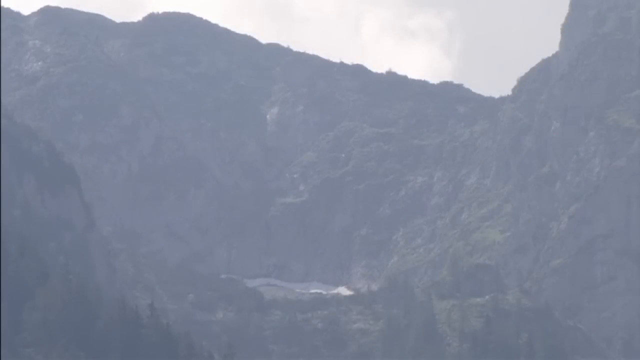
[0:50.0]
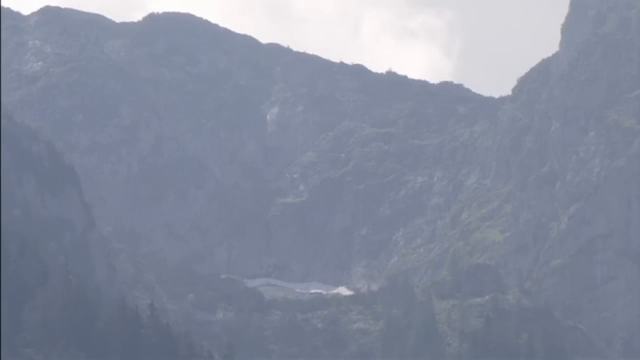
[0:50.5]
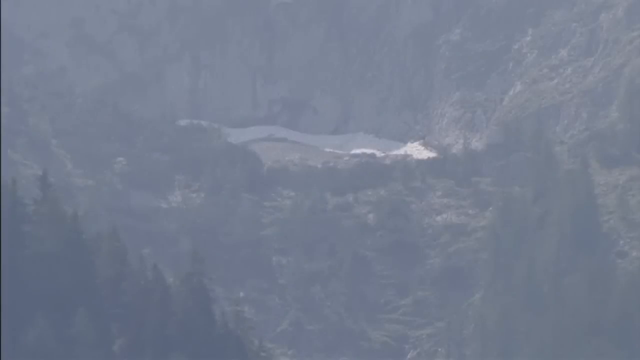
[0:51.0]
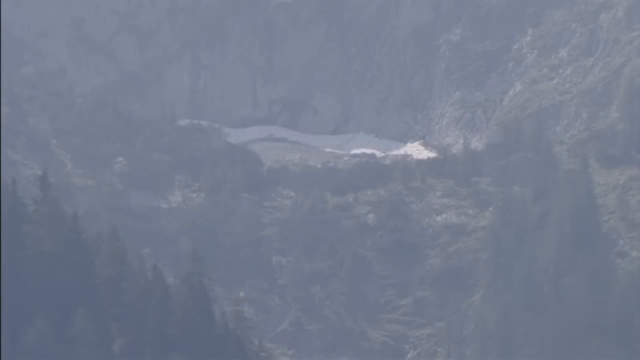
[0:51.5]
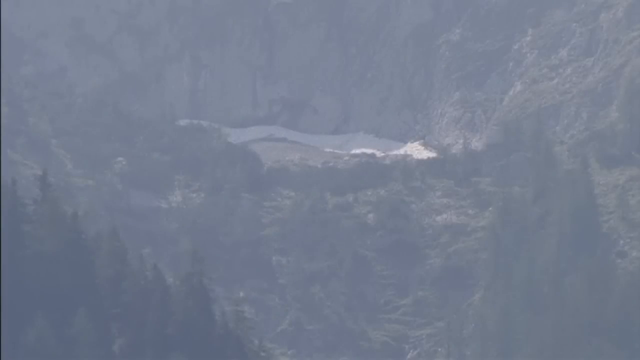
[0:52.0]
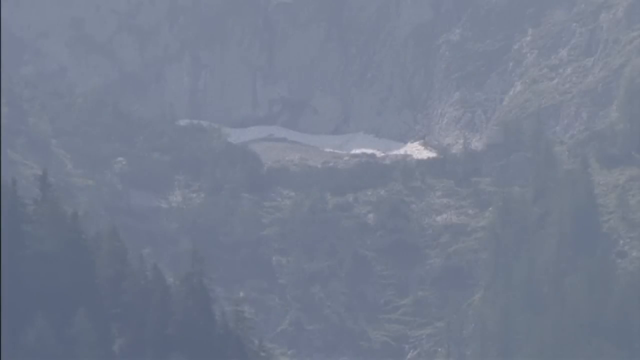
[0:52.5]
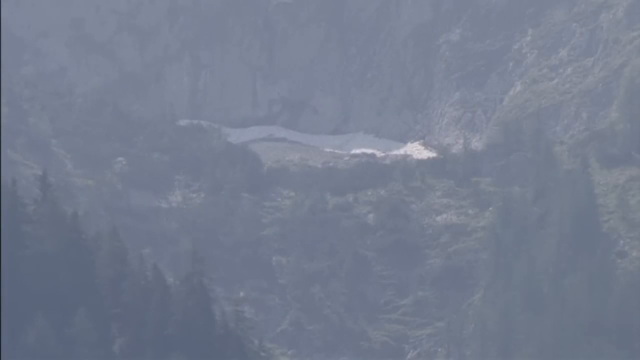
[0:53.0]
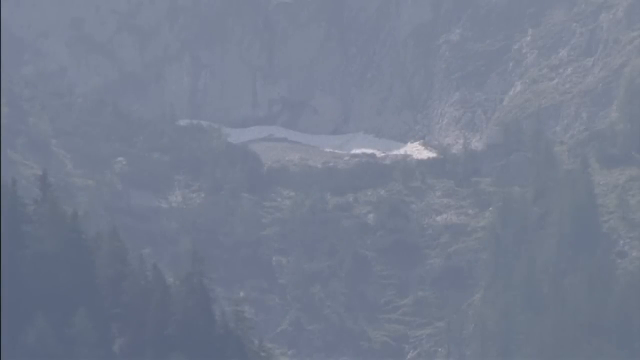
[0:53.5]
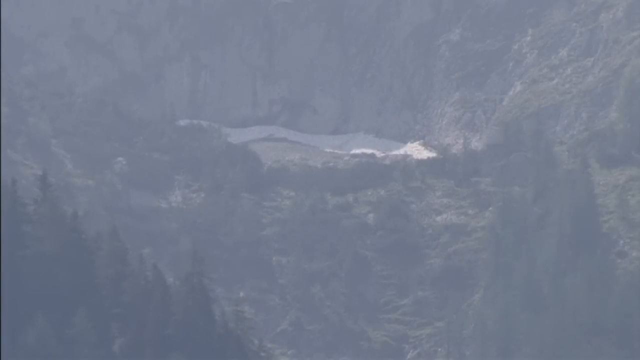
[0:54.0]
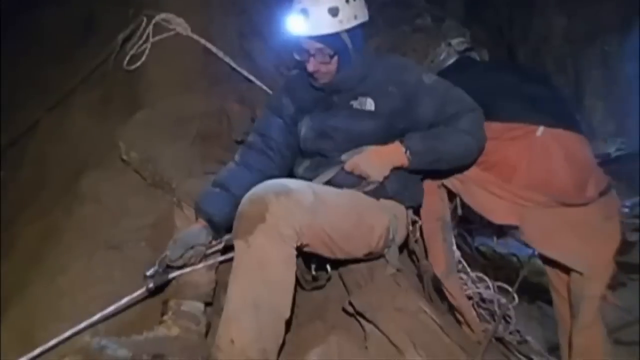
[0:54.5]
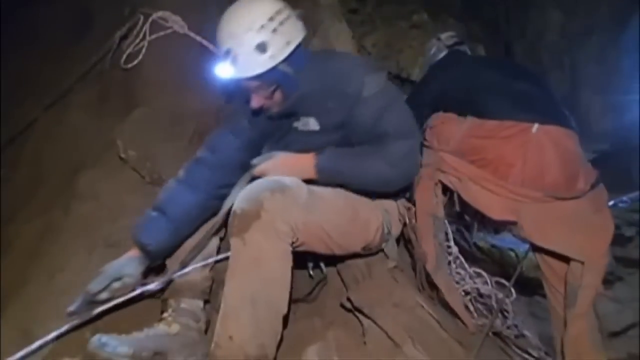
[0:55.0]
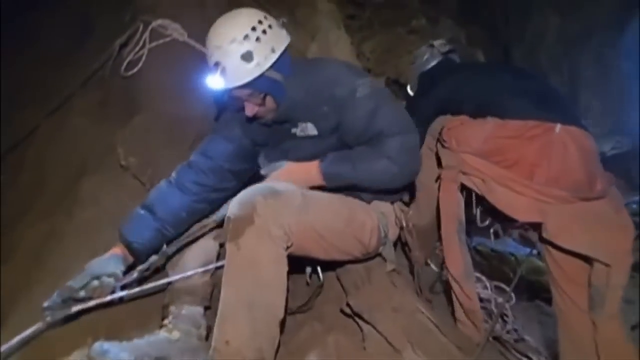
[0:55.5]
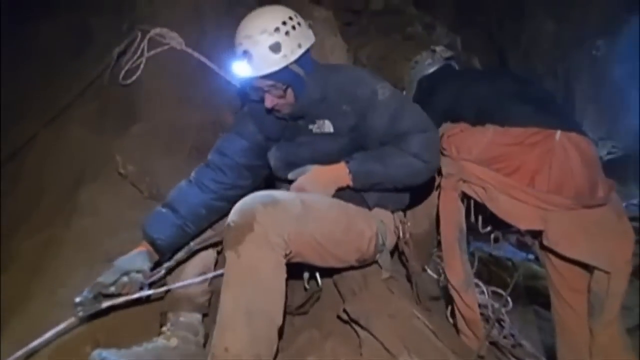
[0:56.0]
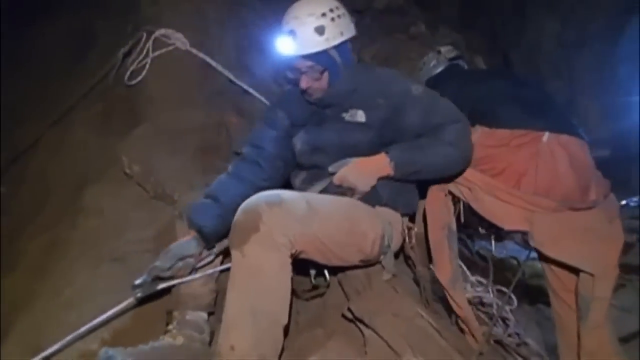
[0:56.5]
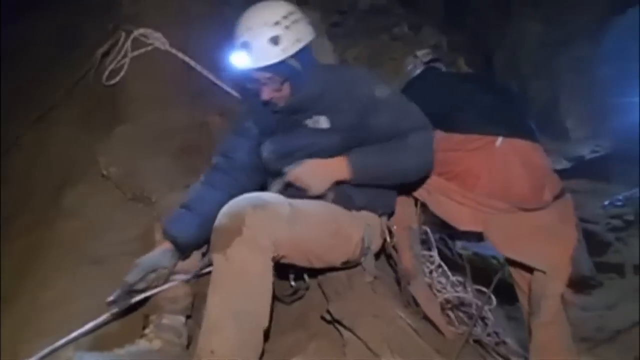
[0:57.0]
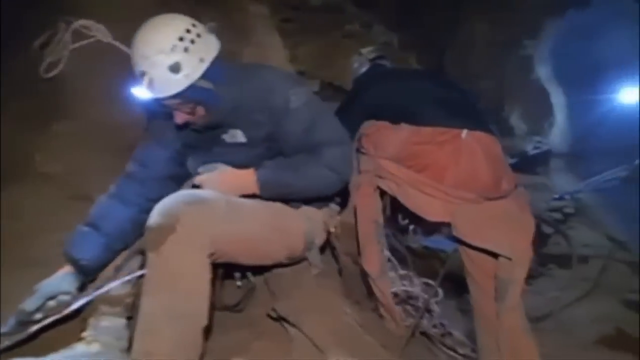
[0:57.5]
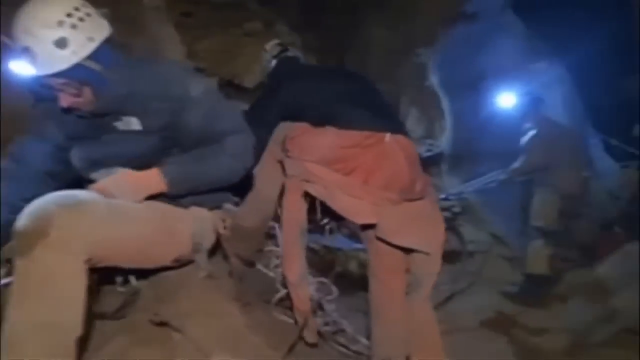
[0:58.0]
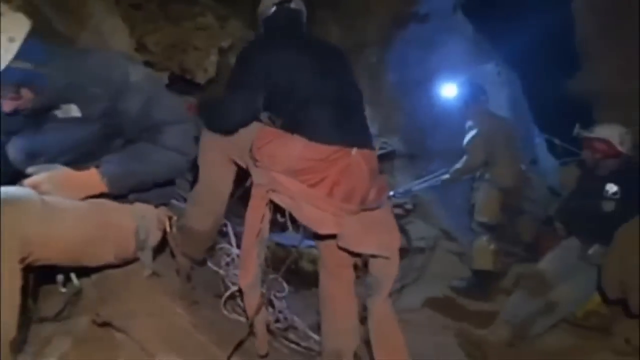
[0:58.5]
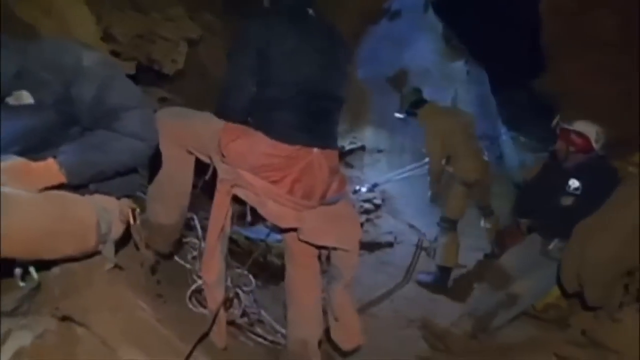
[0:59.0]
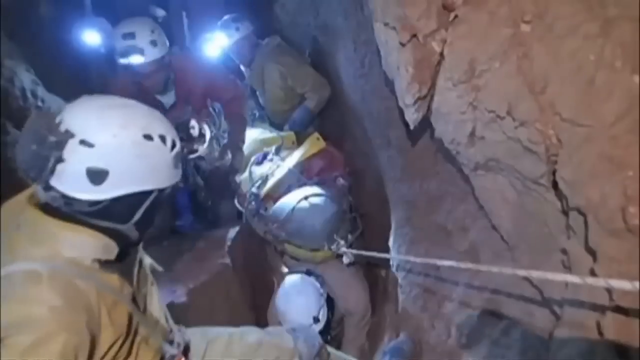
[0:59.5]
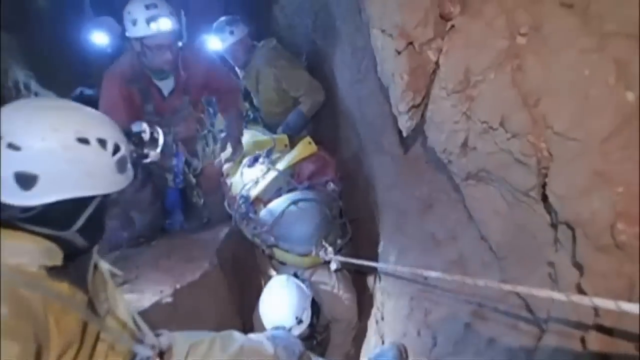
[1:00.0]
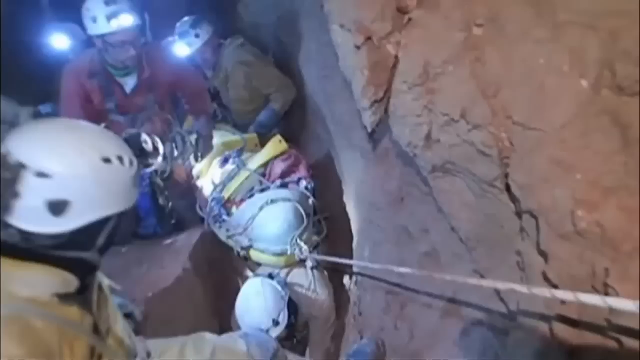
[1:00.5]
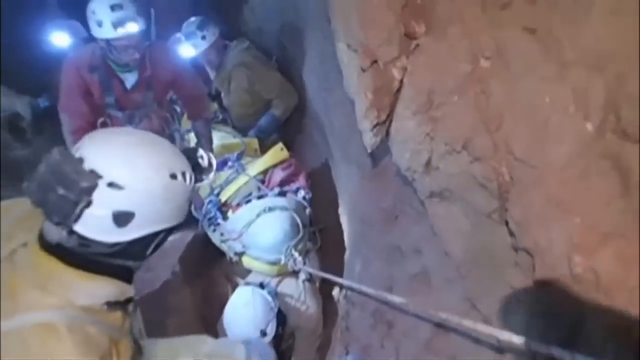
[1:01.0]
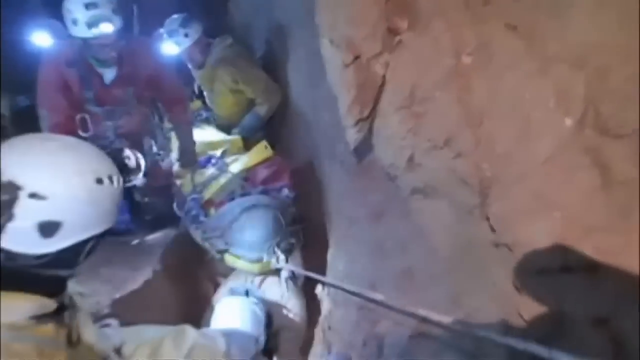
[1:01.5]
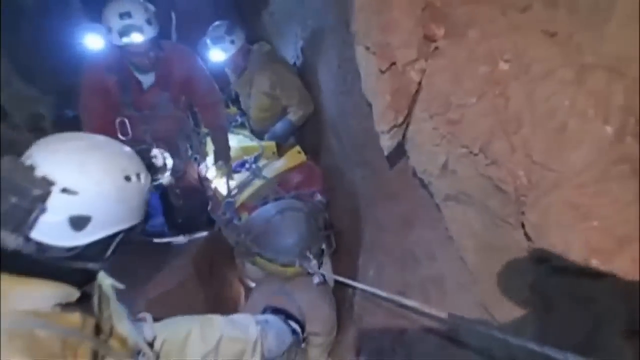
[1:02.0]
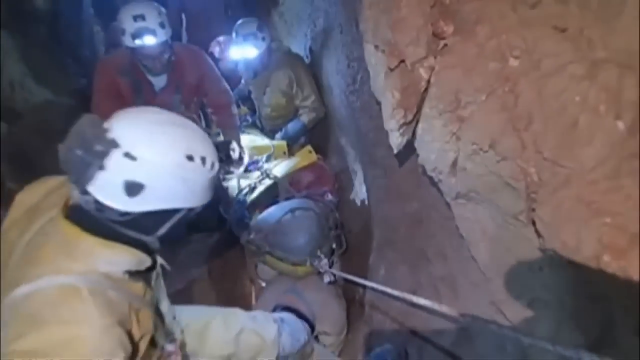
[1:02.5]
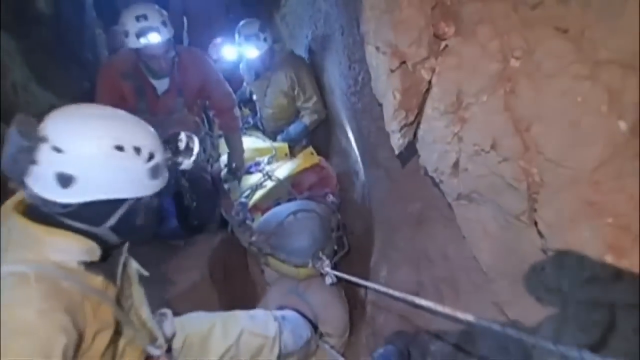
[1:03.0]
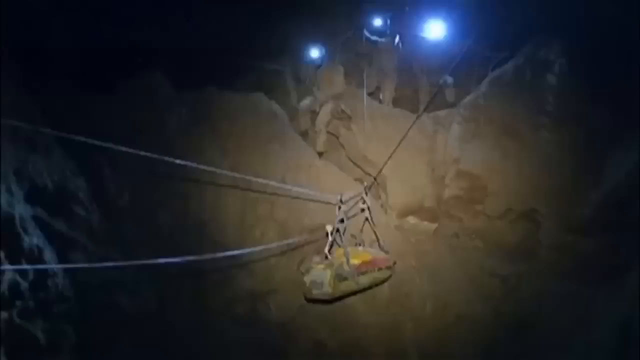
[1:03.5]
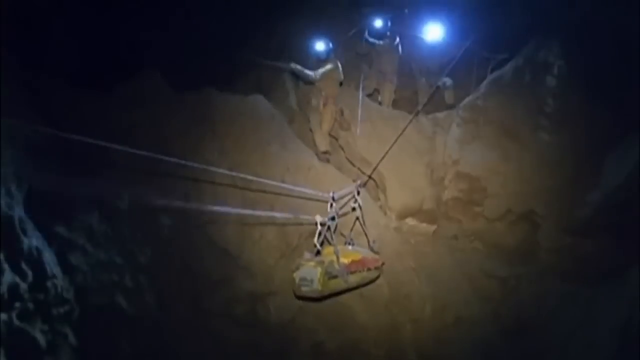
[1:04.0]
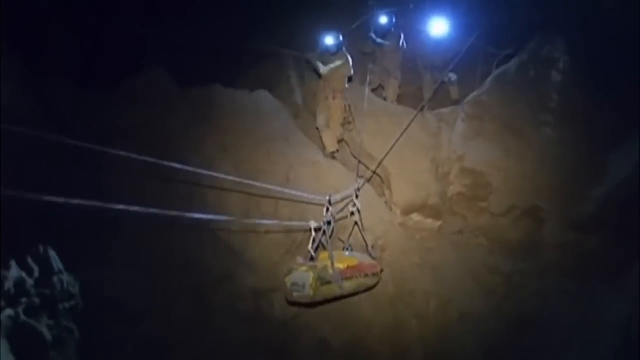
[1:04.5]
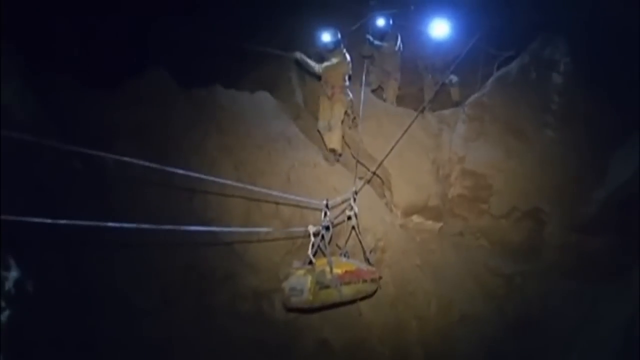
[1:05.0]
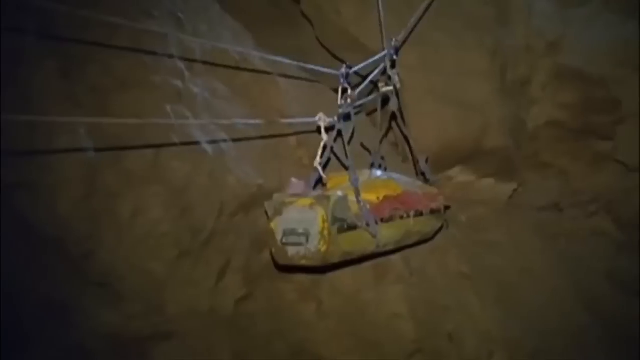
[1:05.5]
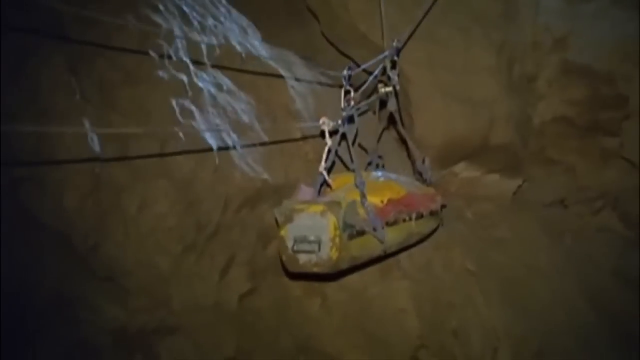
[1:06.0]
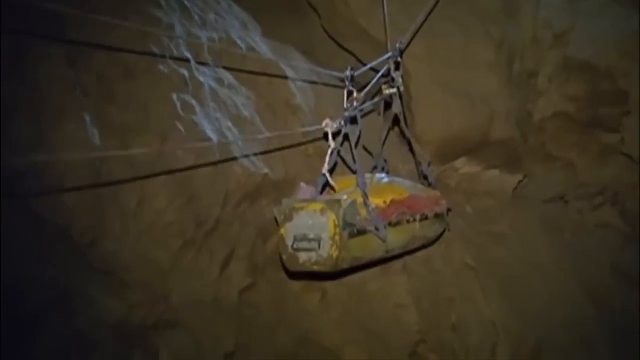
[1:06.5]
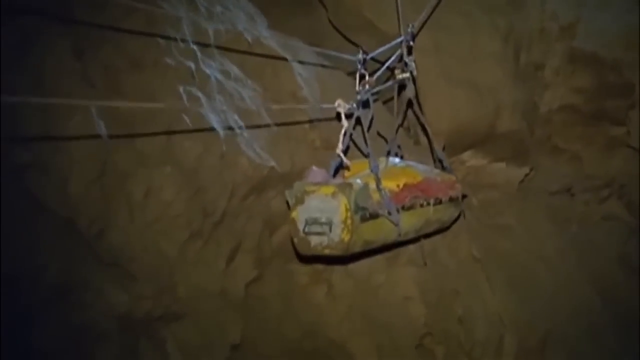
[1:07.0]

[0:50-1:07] What appears to be part of a rescue mission opens with a kind of picturesque view of a mountain from the outside, its coloring gray and brown, with what appears to be a little snow and some trees in the distance. It then transitions to the inside of a cavern, where a couple of workers hook up ropes and pull on a pulley system. They have ropes kind of wrapped around their hands and pull with their own force while also using mechanisms to move the ropes. Some people work in a small, kind of densely compacted area of the cave. A wider area of the cavern follows, with a double-pulley rope system running across this section and a kind of metal canoe-shaped item, covered in something like a yellow cloth, with a person inside it for the rescue. A group of people kind of pulls on sets of ropes, trying to get the person safely across the cavern and out.